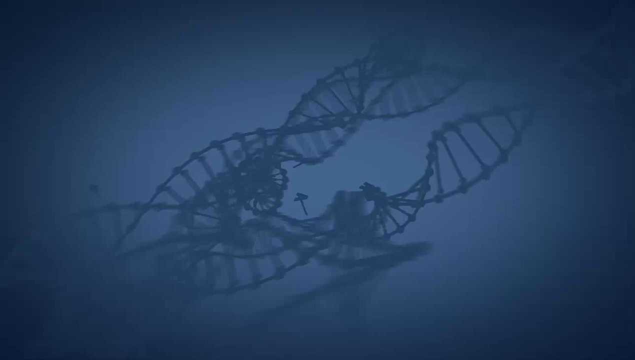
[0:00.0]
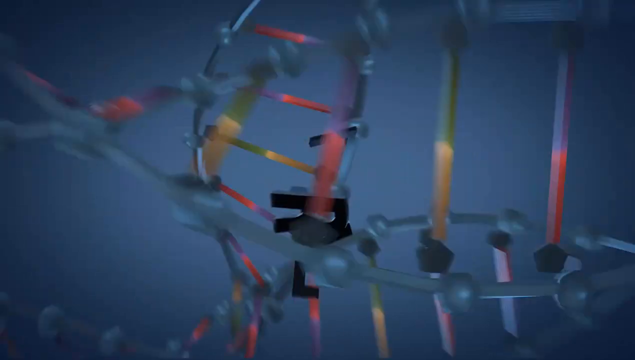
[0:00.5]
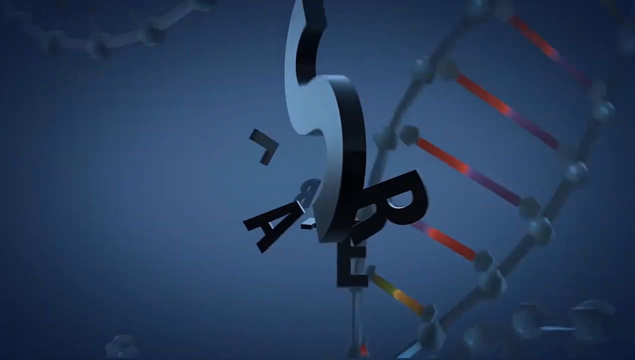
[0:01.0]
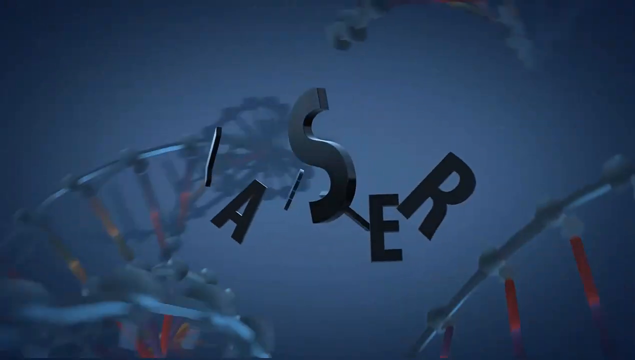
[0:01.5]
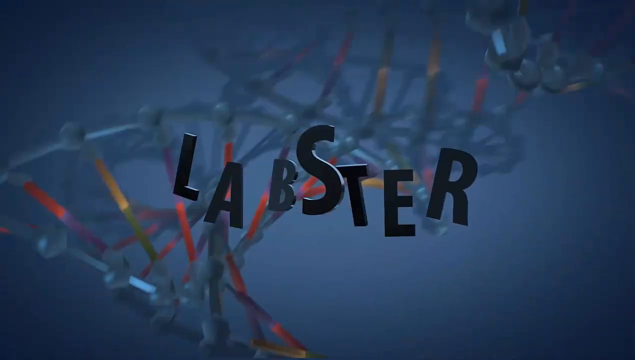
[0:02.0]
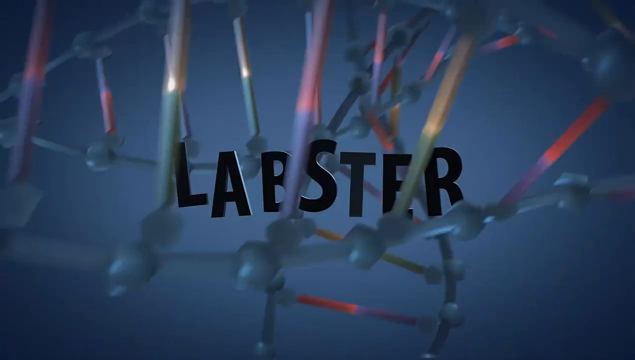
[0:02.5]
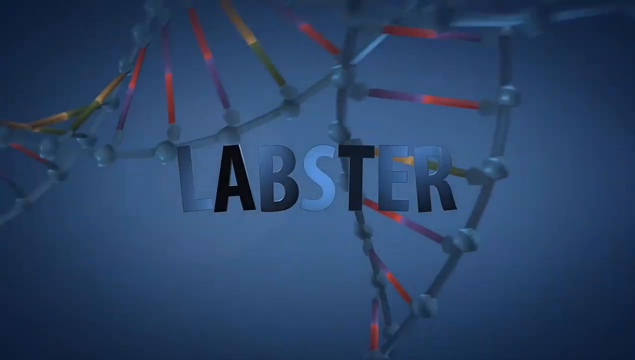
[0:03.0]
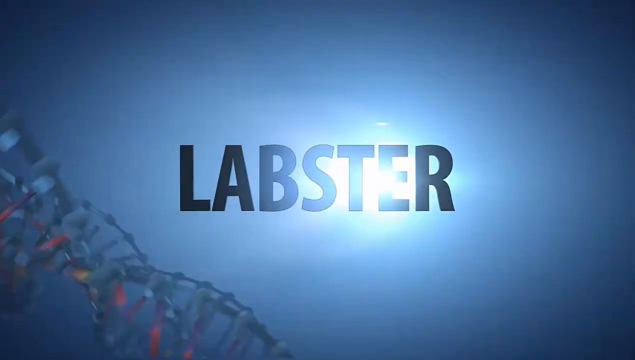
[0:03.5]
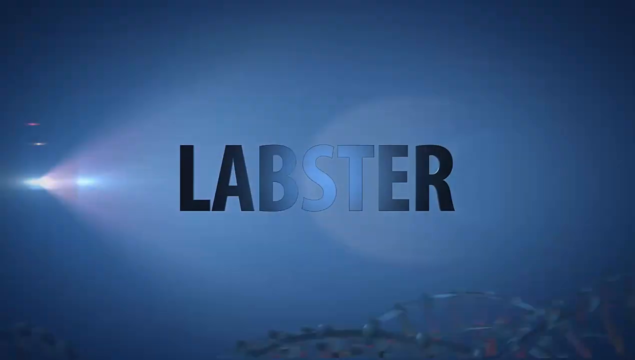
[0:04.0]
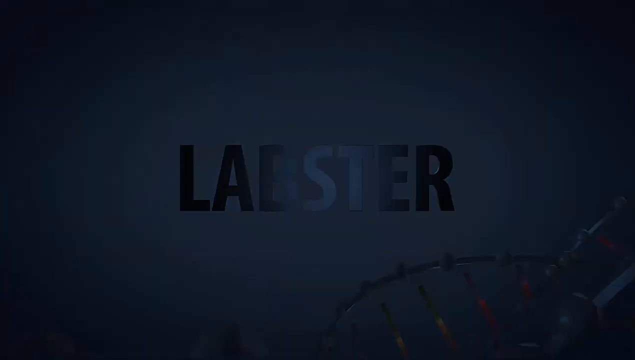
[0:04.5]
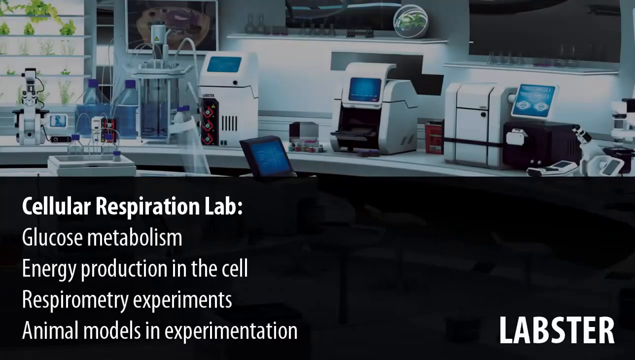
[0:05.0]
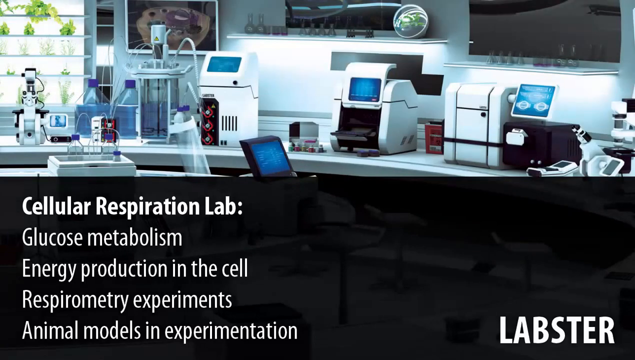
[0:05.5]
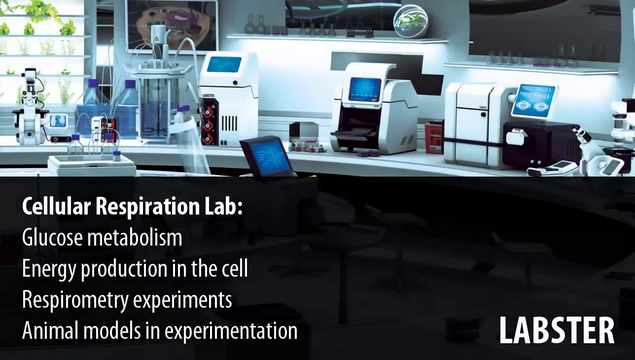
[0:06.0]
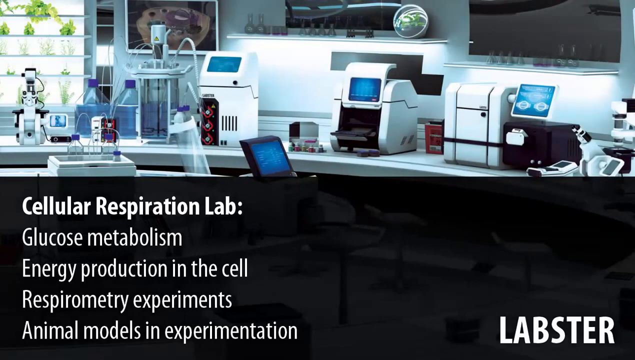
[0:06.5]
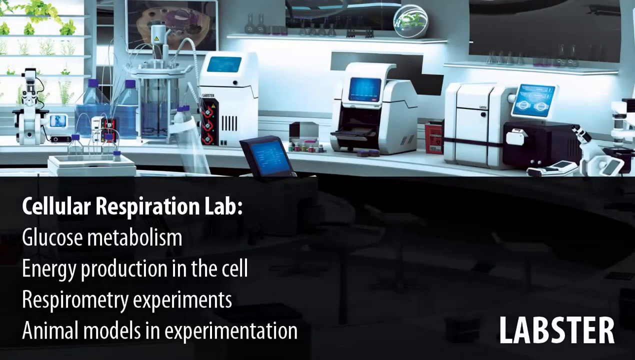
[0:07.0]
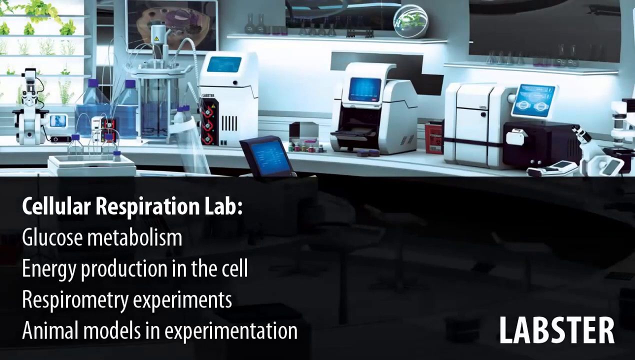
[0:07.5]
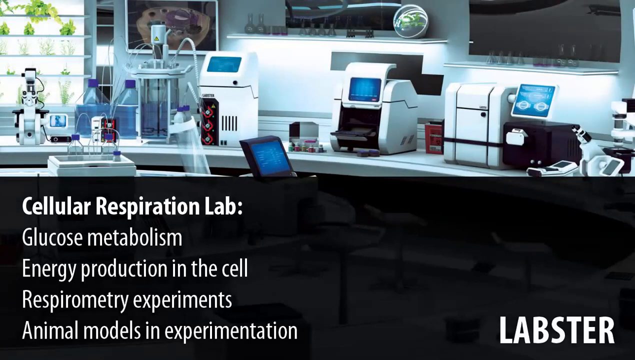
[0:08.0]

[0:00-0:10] The screen is dark blue, and suddenly what looks like strands of DNA start spinning, twisting and rolling all over the screen. The word "lobster" in black appears in the middle of the screen, and a bright white light starting under the last R of the word shines all the way to the L and then off the screen. Next, the screen is split into a top half and a bottom half. The top half shows a lab: a white countertop with little white machines that have blue screens, a see-through machine with something blue inside and tubes hanging out of it, and on the very left side, bright white, small glass shelves holding what look like little green plants. The bottom half is totally black; in its top left corner it reads "cellular respiration lab", and underneath, one below the other, "glucose metabolism", "energy production in the cell", "respiratory experiments" and "animal models and experimentation". In the bottom right-hand corner of the screen, in white, it says "labster".